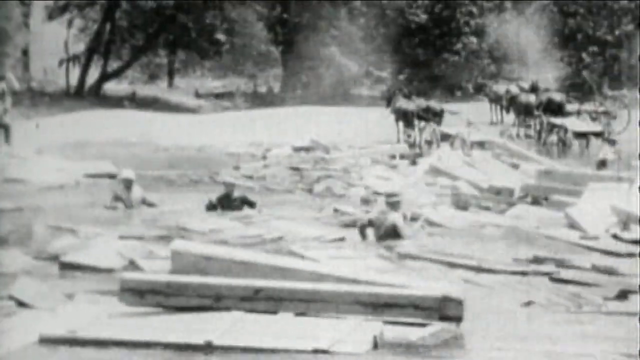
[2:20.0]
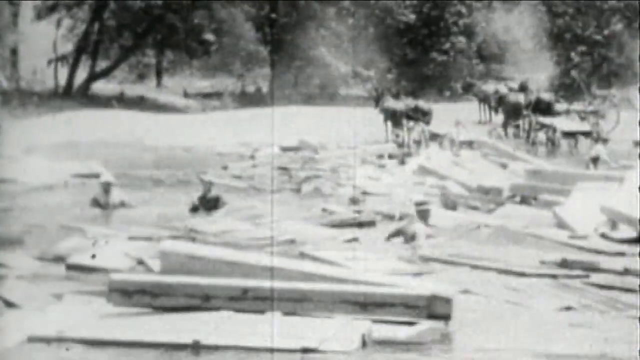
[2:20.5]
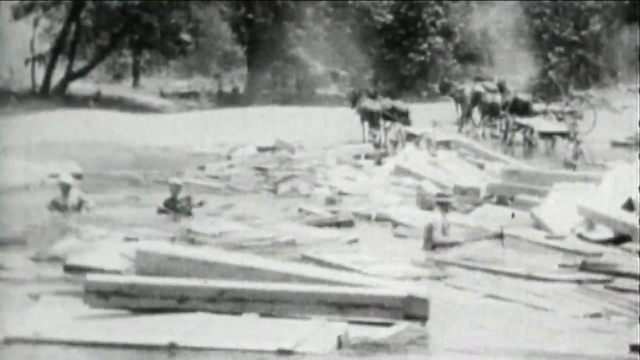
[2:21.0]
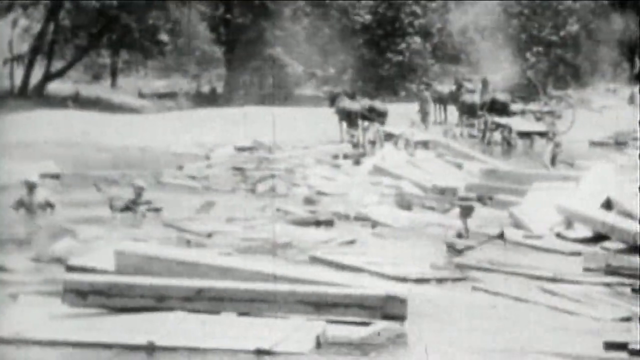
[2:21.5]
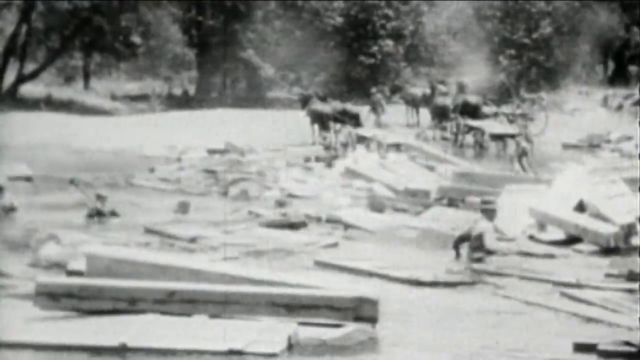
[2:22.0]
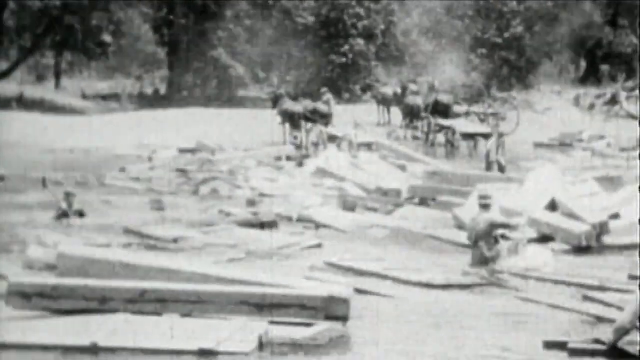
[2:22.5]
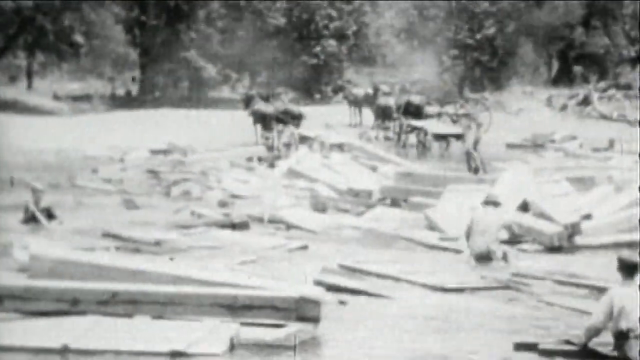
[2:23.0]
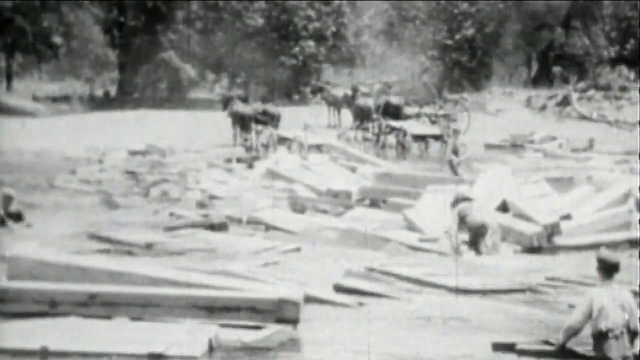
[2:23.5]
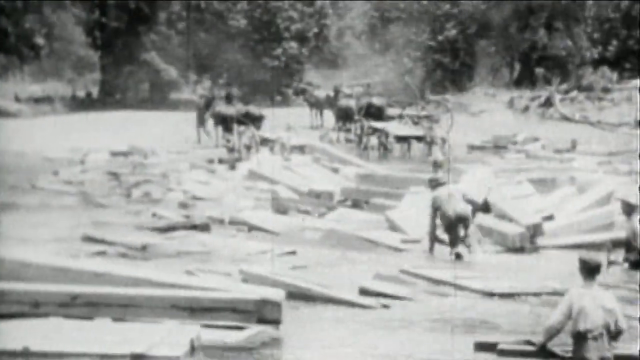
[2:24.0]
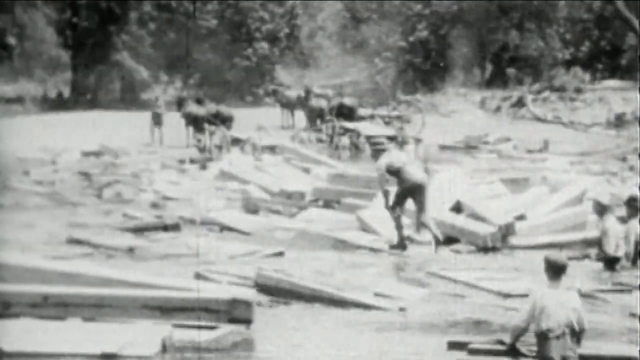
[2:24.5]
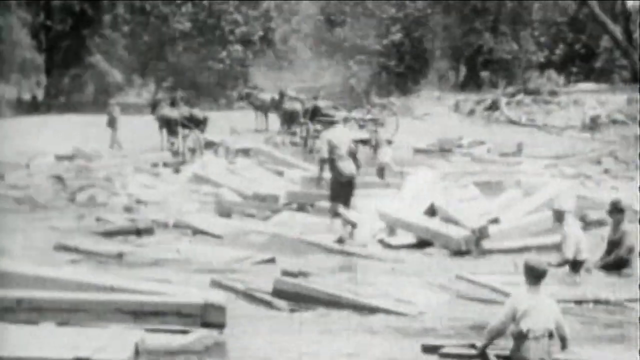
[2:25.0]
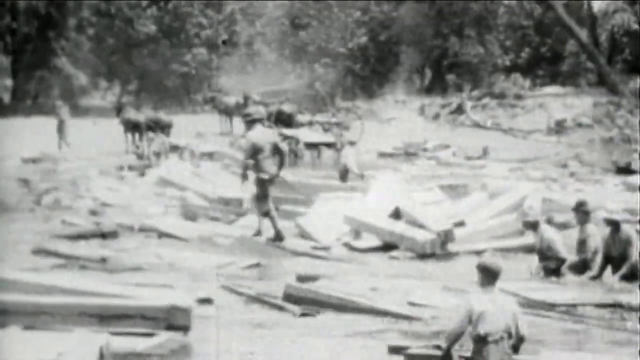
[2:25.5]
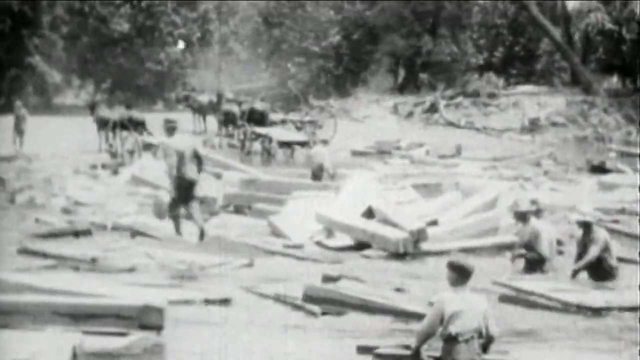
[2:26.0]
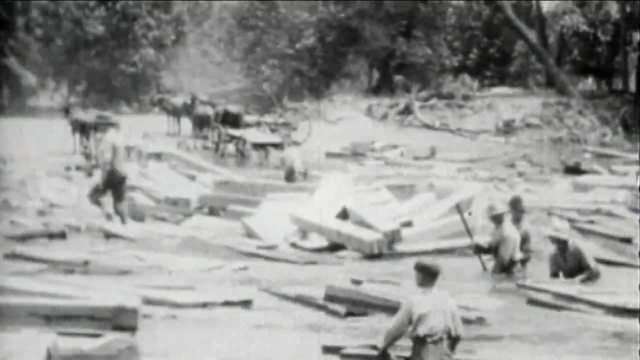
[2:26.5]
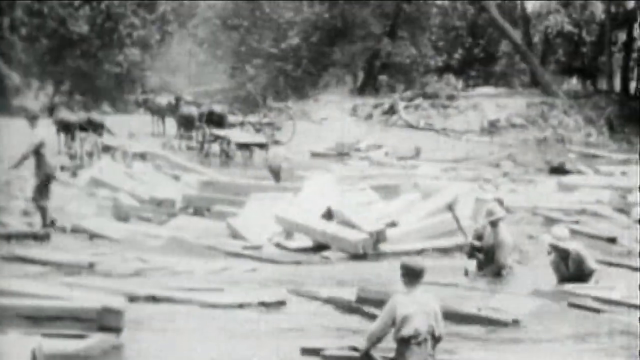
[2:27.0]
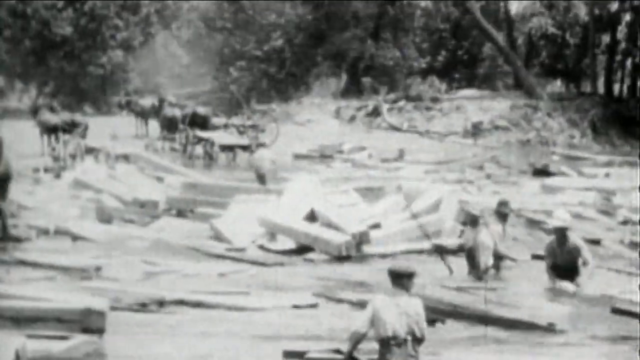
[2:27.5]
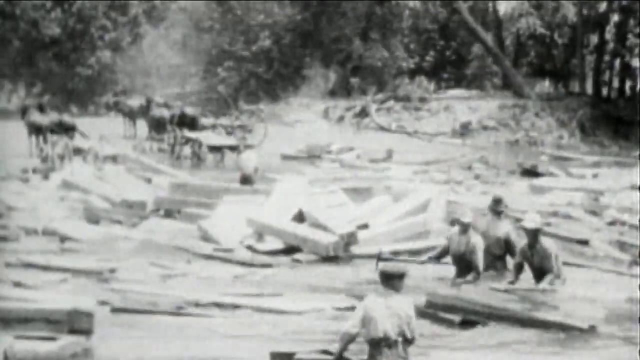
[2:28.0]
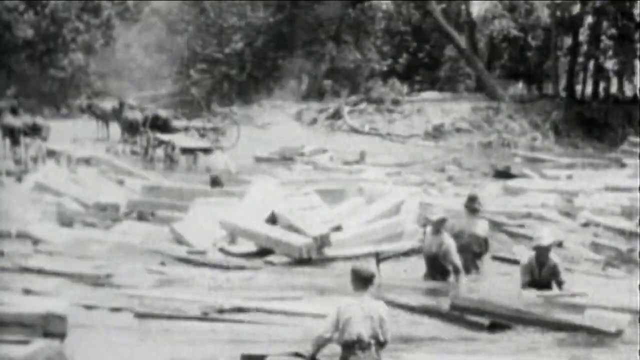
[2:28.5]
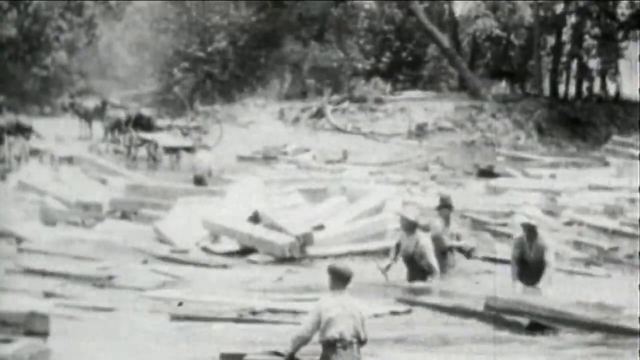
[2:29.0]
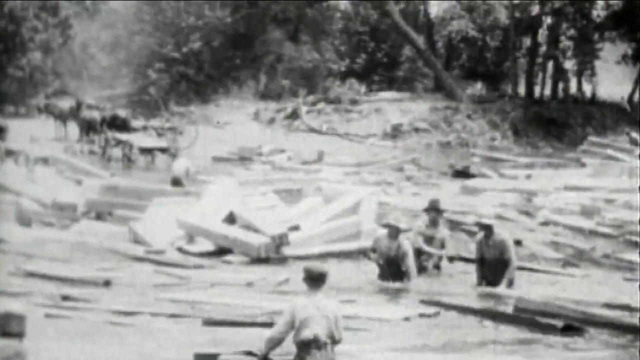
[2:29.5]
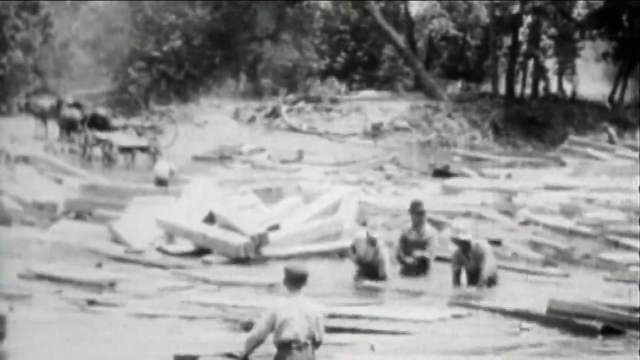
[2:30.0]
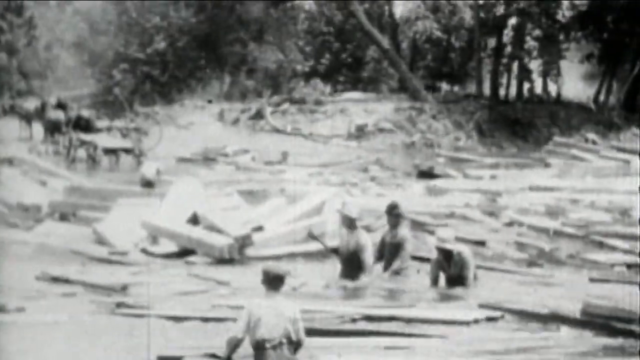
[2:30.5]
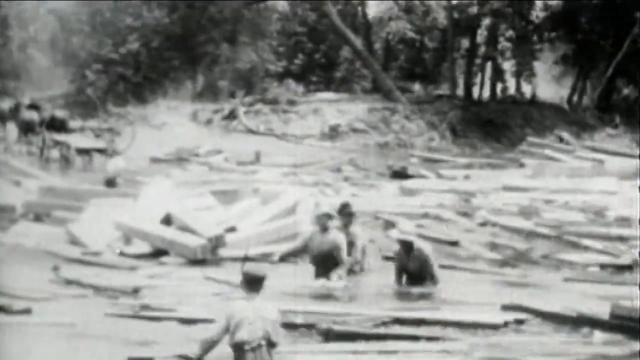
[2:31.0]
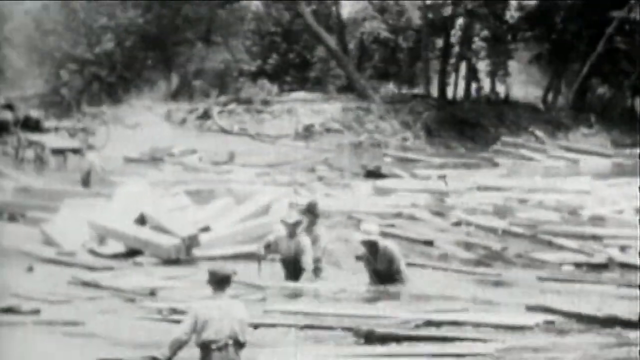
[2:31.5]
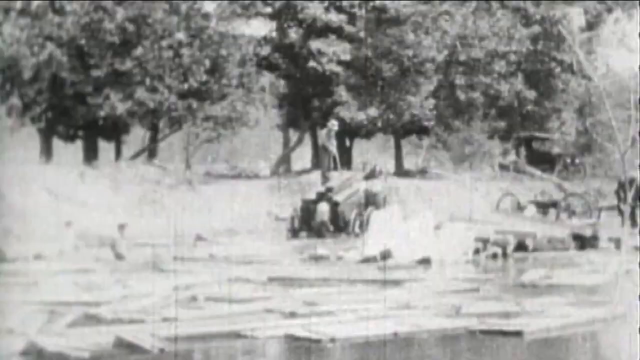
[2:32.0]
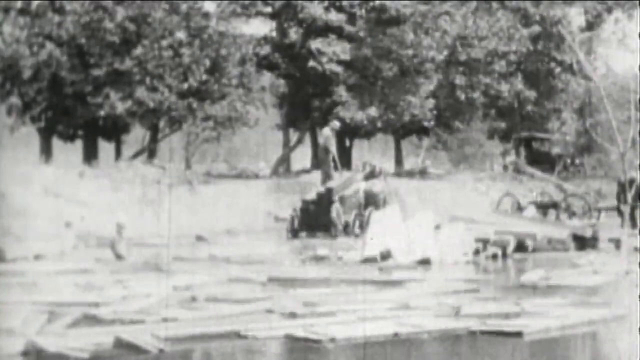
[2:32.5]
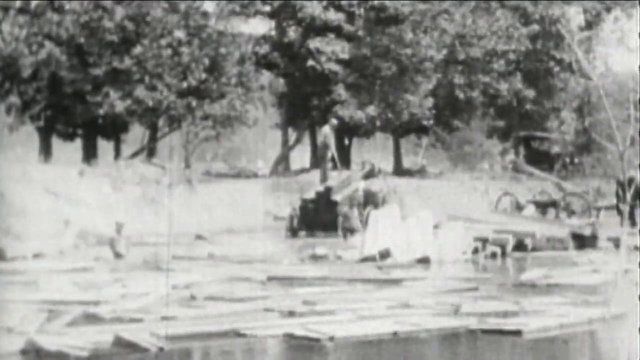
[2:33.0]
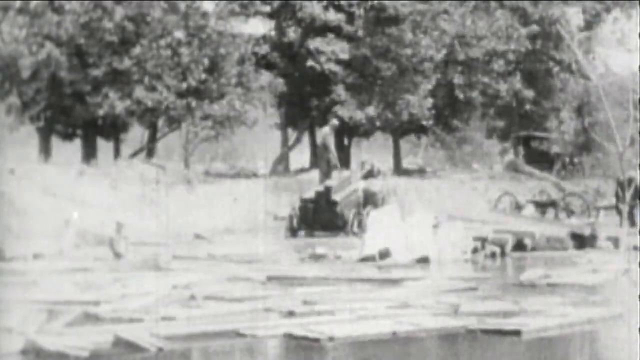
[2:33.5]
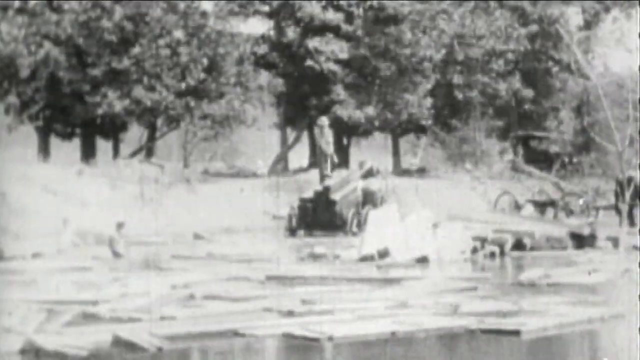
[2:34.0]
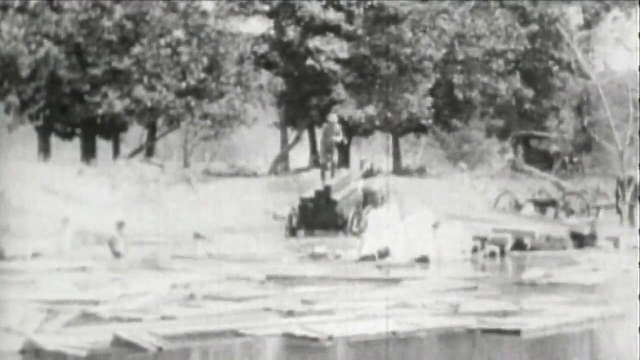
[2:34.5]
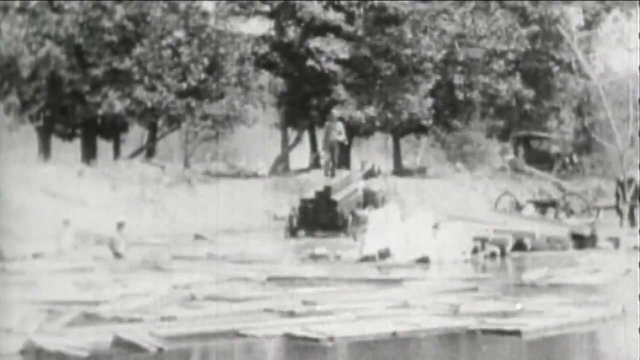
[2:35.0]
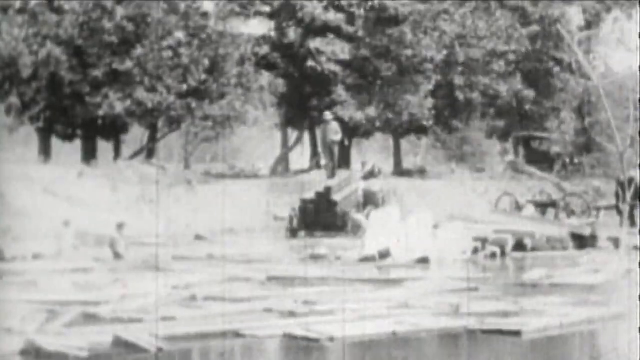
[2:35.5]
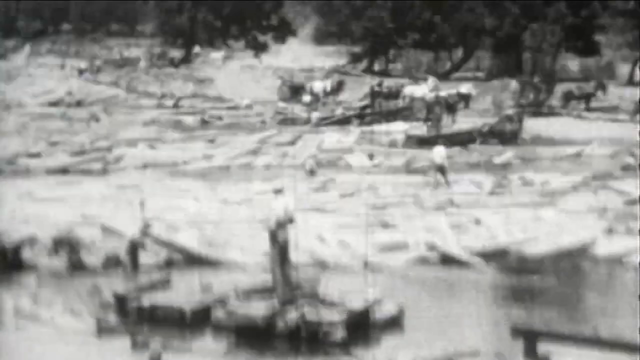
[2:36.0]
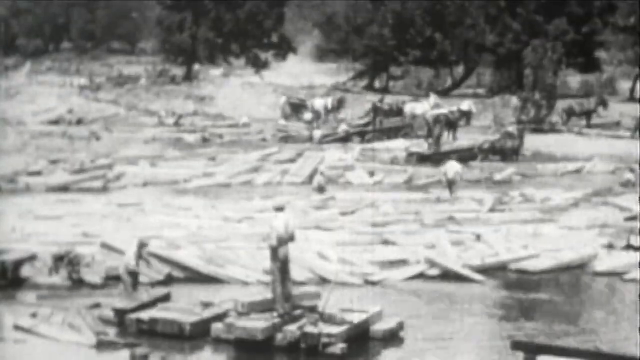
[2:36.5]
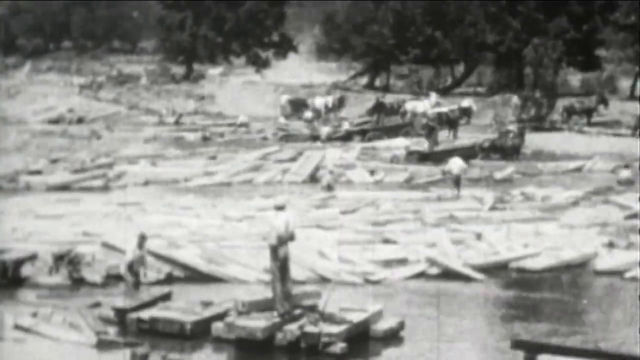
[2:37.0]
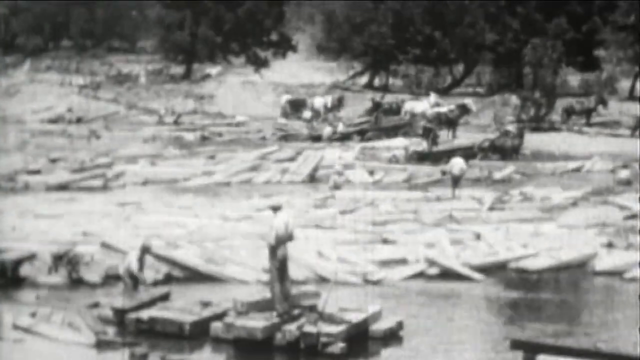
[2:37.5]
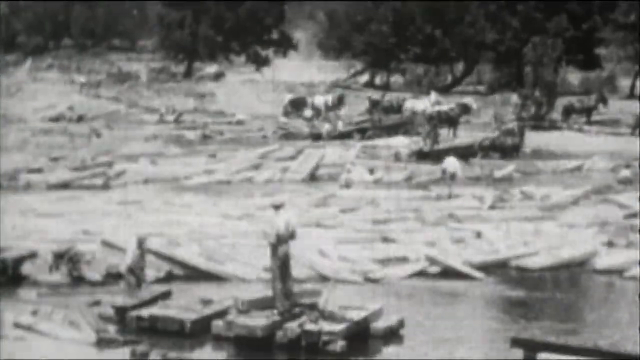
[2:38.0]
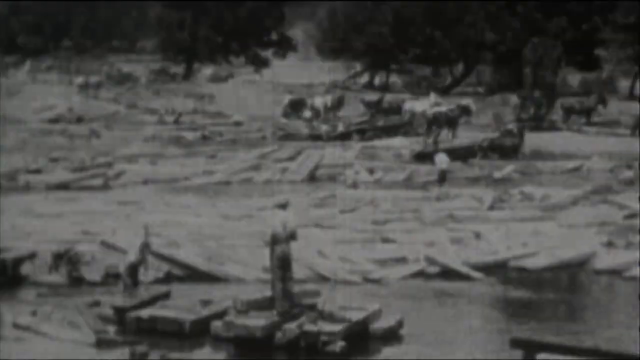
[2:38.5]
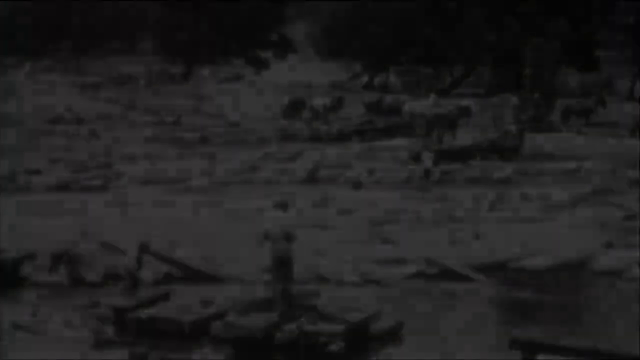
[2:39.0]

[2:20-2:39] The black-and-white footage continues with people pulling logs out of the water and cutting logs down. Many workers and many horses are present as the wood is put together and carried. There is a lot of wood, and it appears to be used to make a bridge over the river.